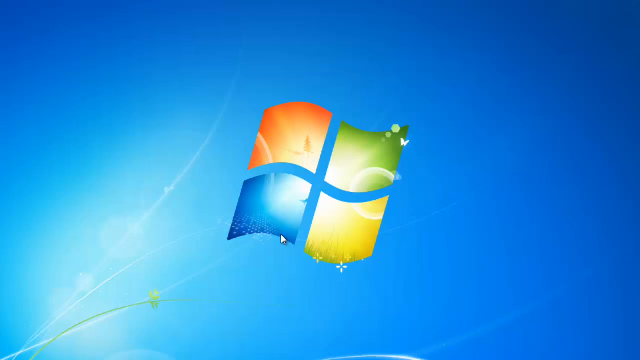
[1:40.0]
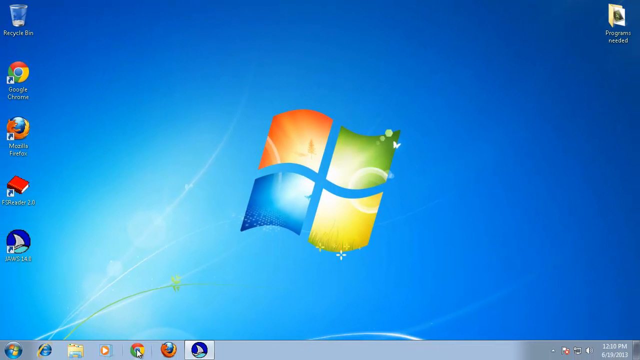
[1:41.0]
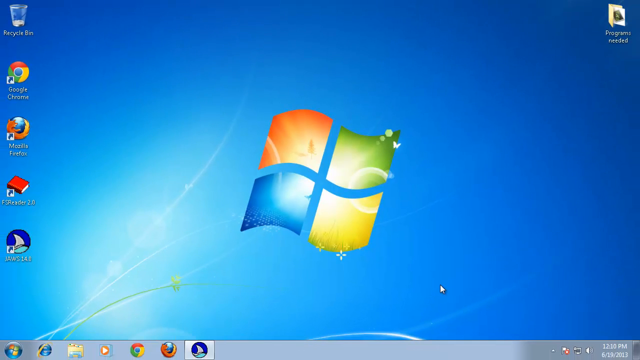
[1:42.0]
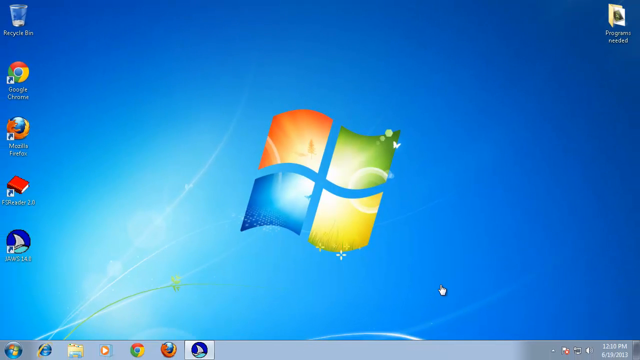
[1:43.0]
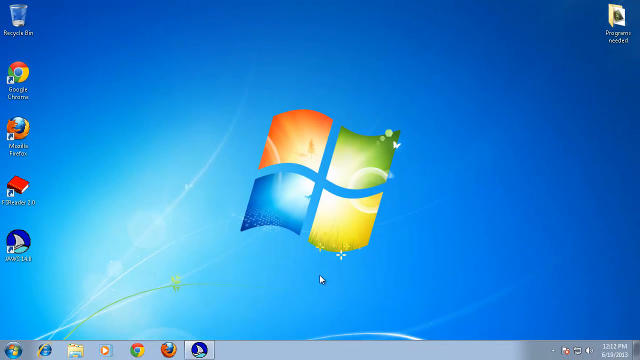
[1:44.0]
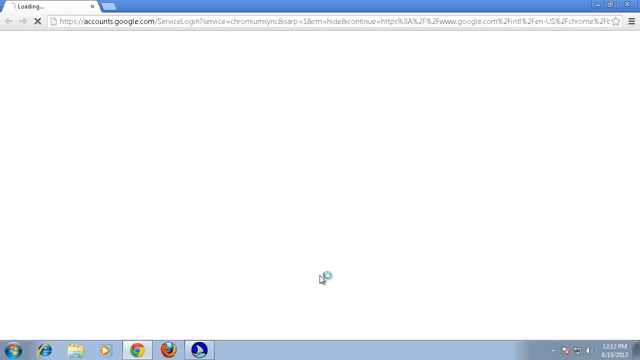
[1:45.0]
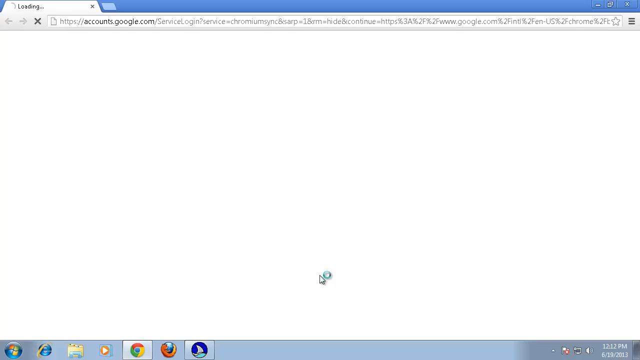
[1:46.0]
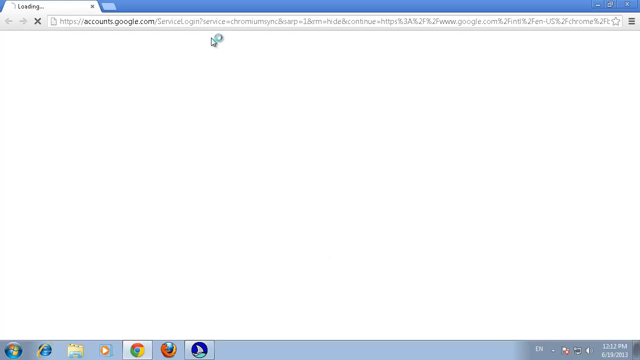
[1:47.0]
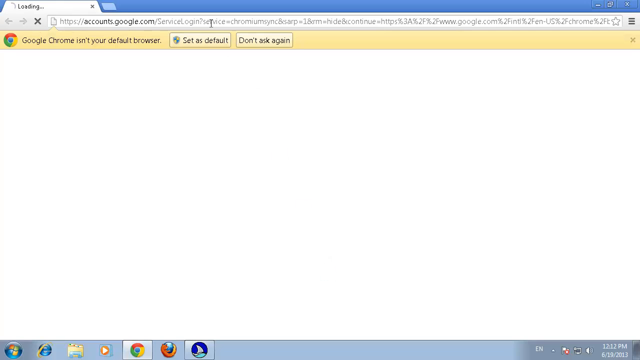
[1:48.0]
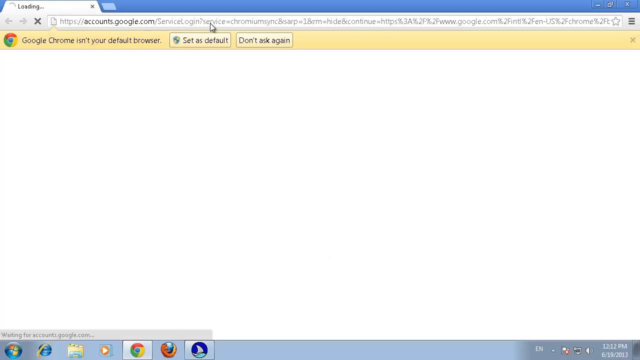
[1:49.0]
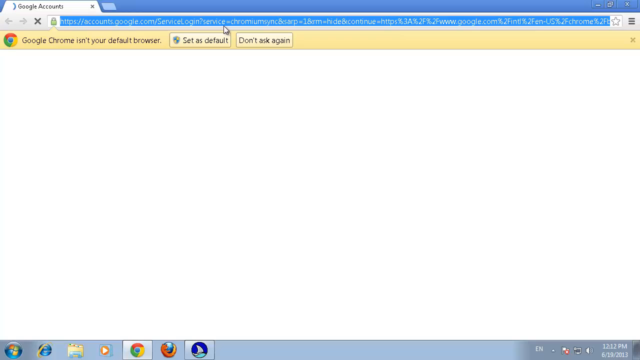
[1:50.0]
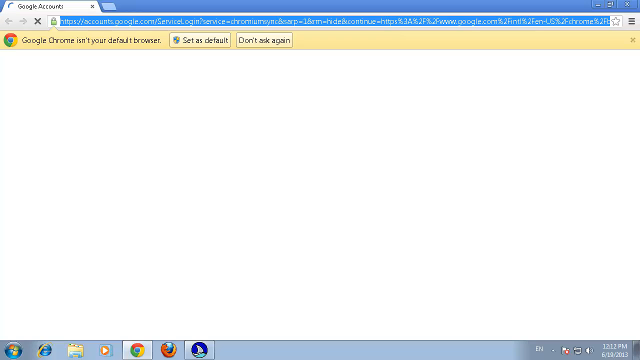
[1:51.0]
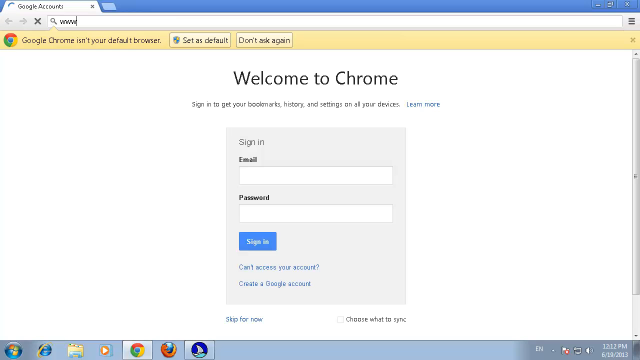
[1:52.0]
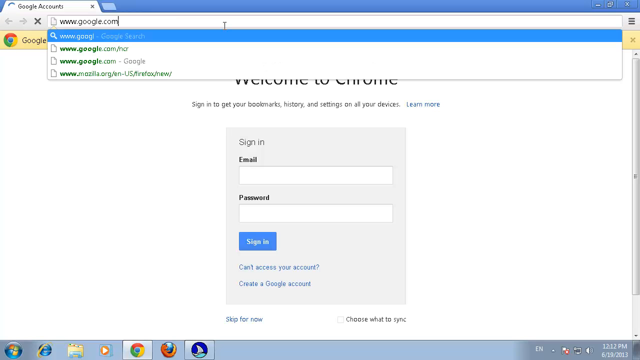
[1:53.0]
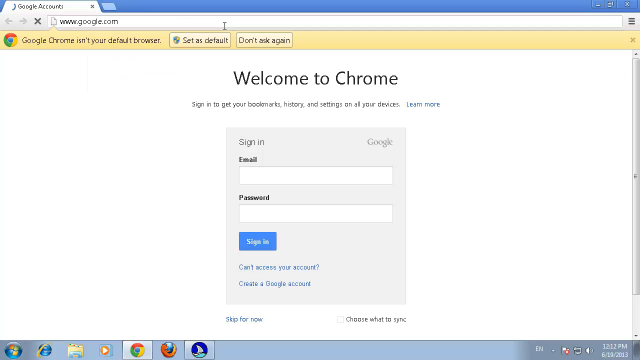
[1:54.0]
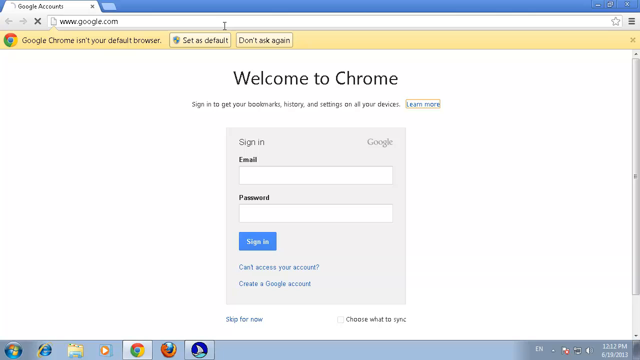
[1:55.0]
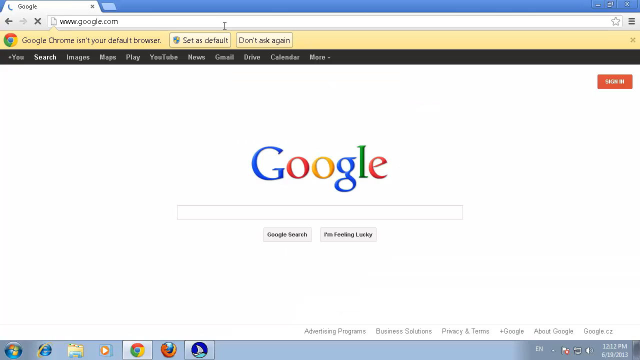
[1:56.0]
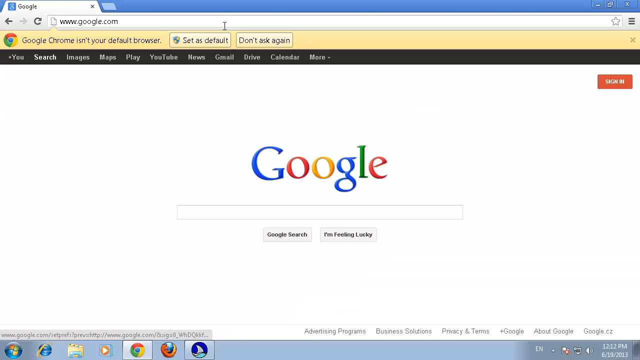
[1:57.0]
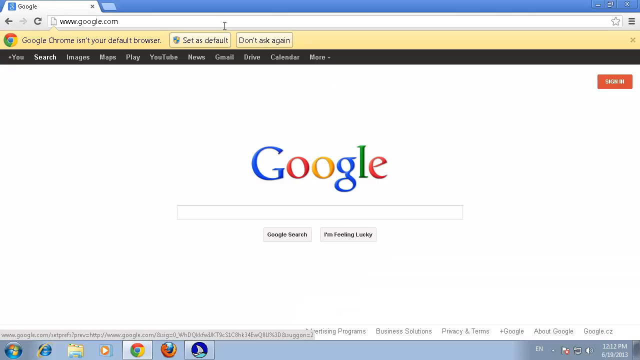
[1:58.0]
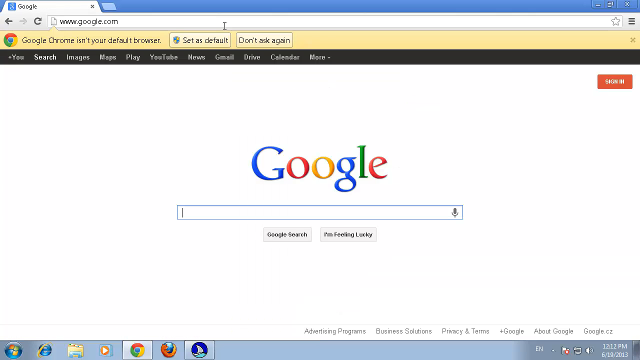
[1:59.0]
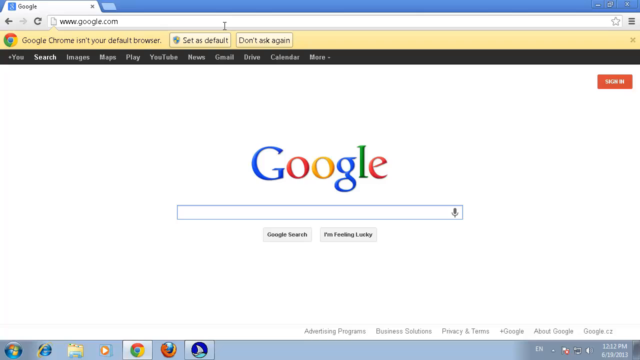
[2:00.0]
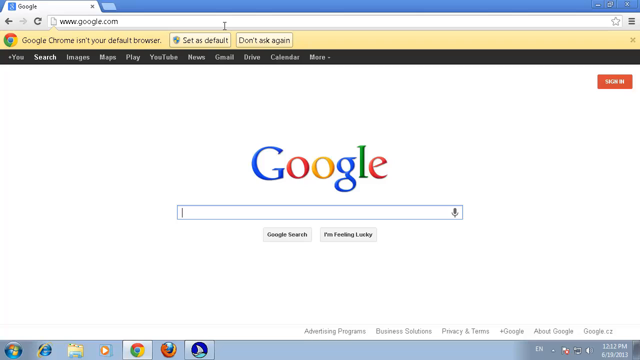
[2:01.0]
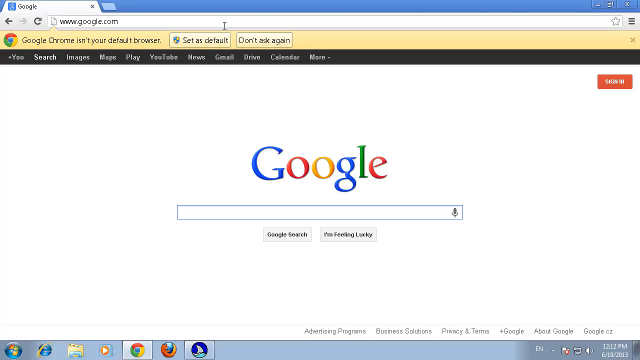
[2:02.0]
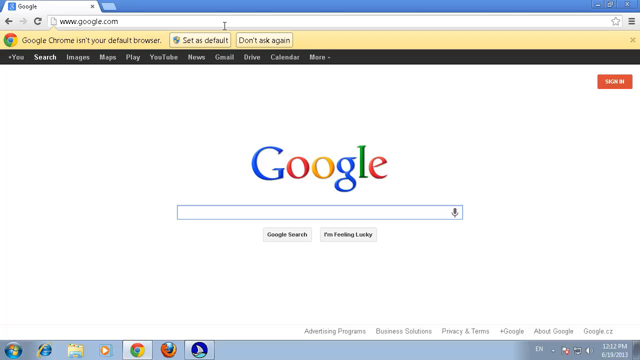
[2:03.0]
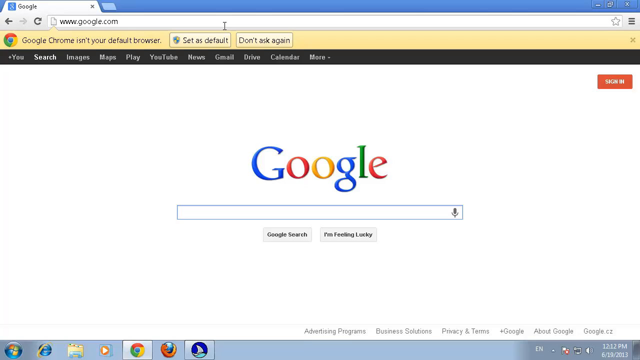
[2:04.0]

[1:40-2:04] The Windows desktop home screen appears, with a sunny blue sky type wallpaper and the Windows logo in the center, with what appears to be a four seasons theme represented by the logo's orange, green, blue and yellow colors. The desktop icons then load in. The cursor is in the bottom right corner and sits there for a second before turning into a hand icon, then back to the arrow, and then a small circular loading symbol appears to its right. A web browser page then opens, and the user types the website www.google.com into the browser.